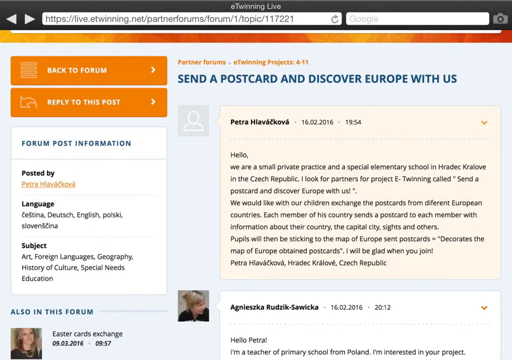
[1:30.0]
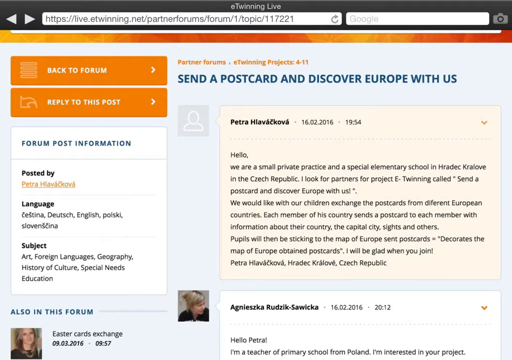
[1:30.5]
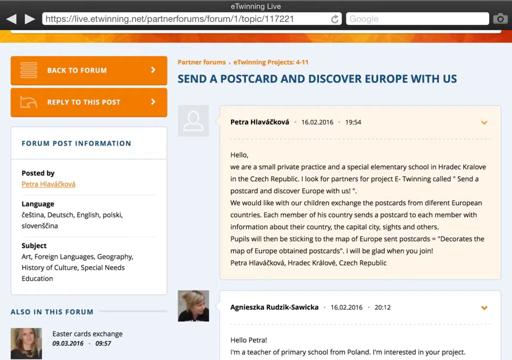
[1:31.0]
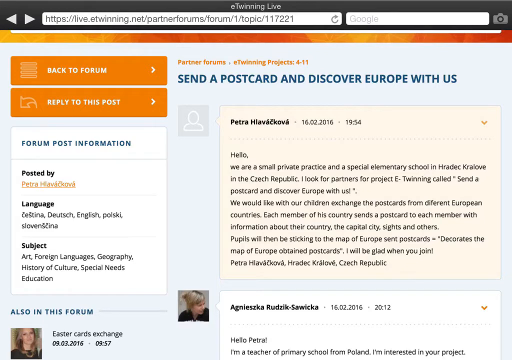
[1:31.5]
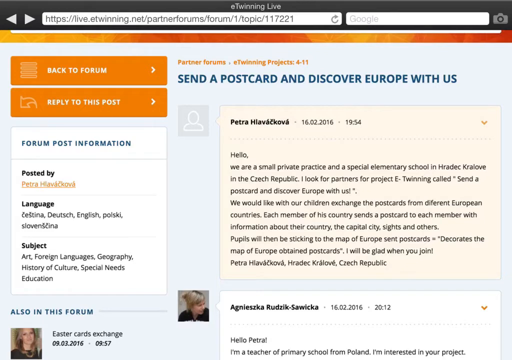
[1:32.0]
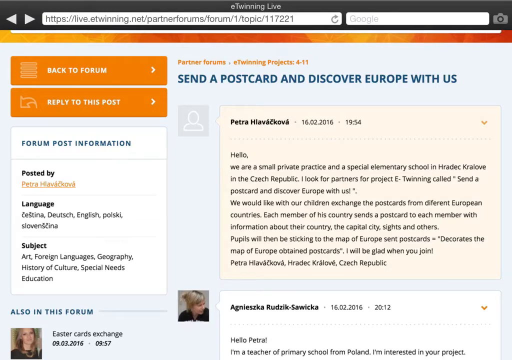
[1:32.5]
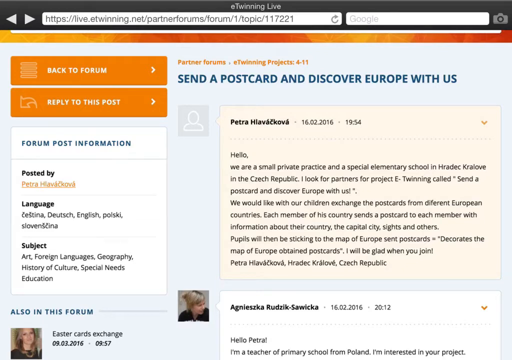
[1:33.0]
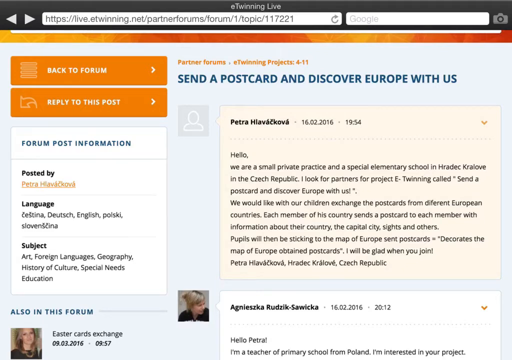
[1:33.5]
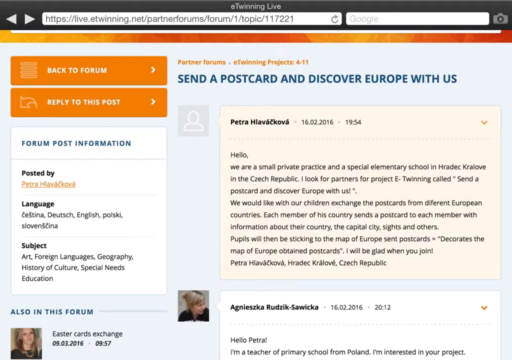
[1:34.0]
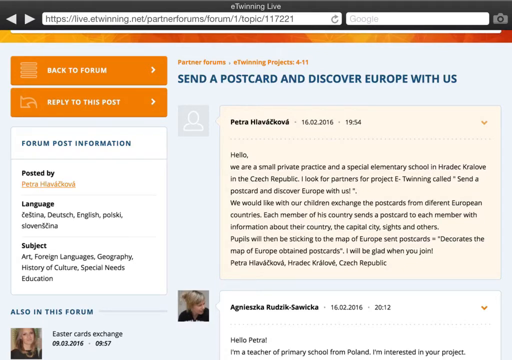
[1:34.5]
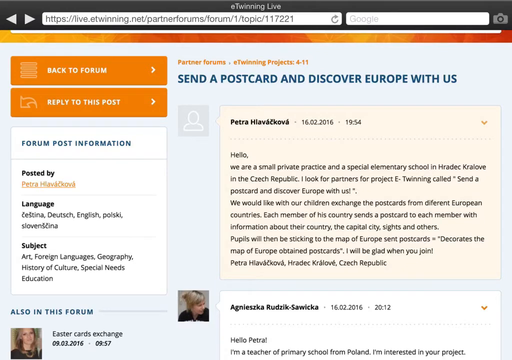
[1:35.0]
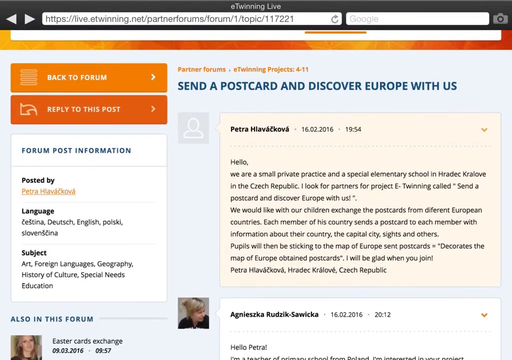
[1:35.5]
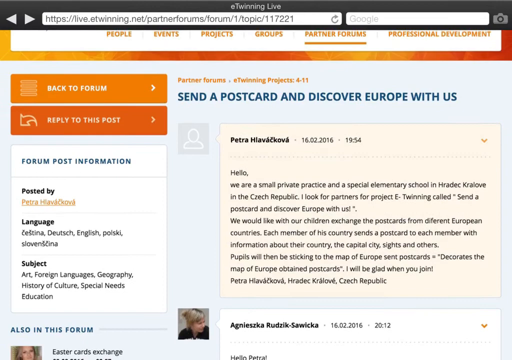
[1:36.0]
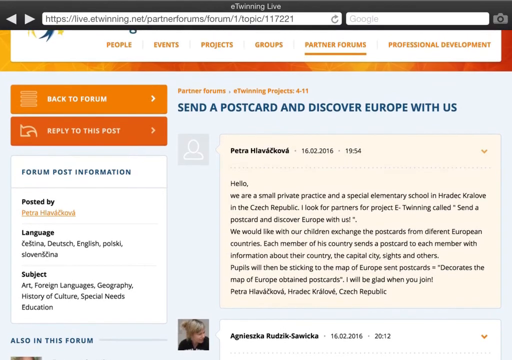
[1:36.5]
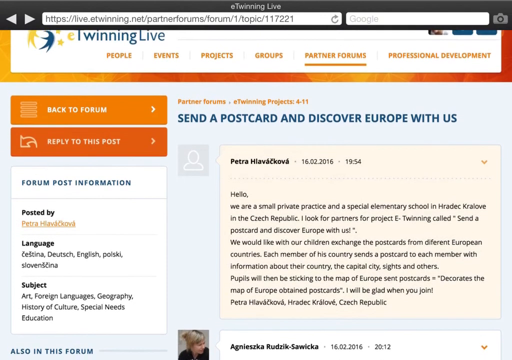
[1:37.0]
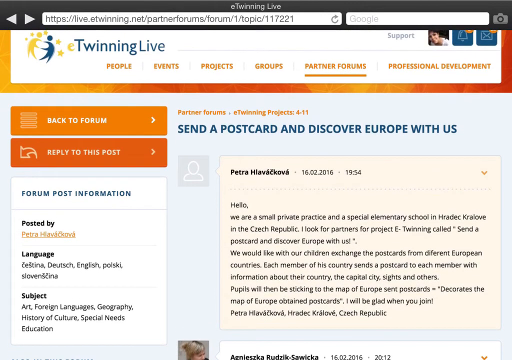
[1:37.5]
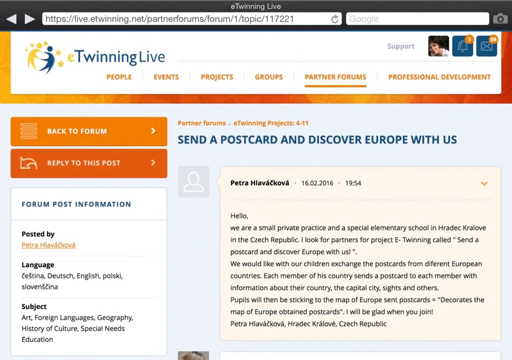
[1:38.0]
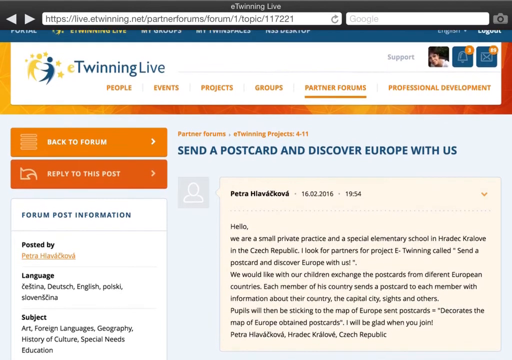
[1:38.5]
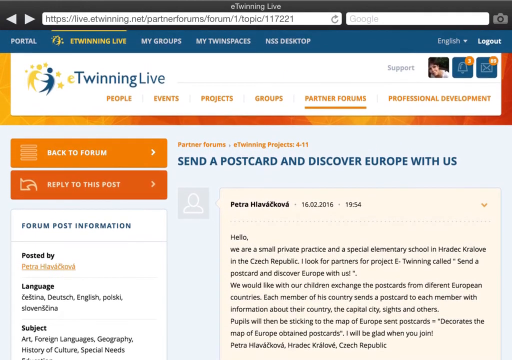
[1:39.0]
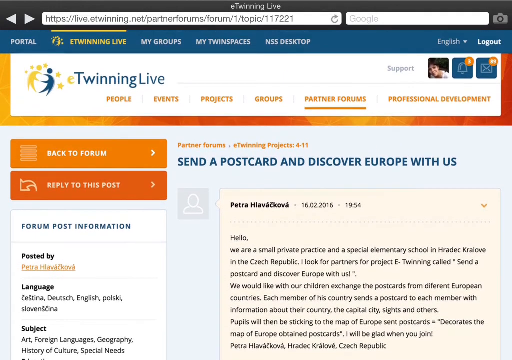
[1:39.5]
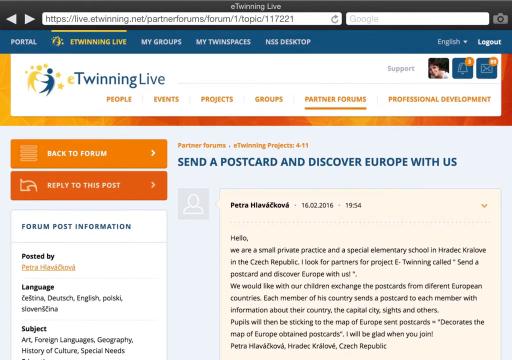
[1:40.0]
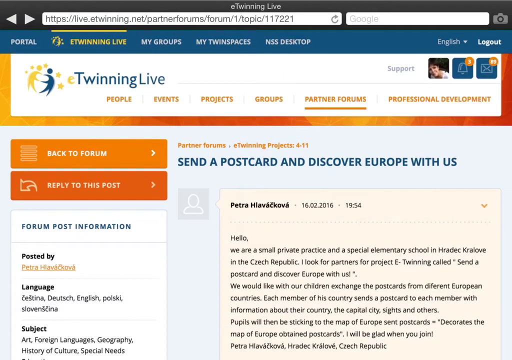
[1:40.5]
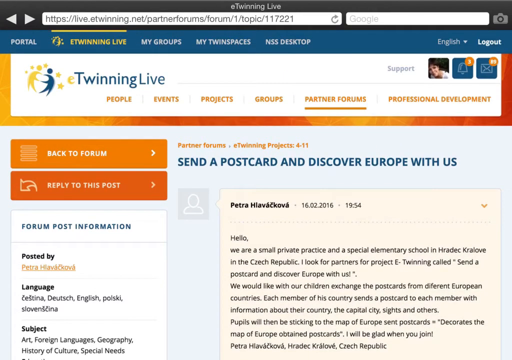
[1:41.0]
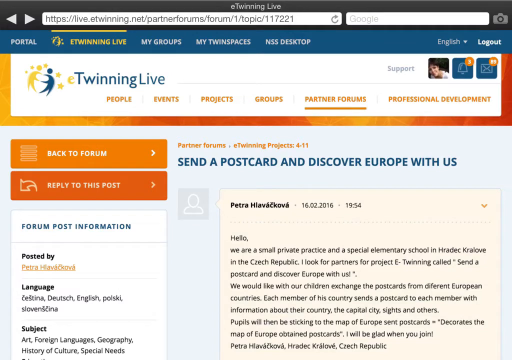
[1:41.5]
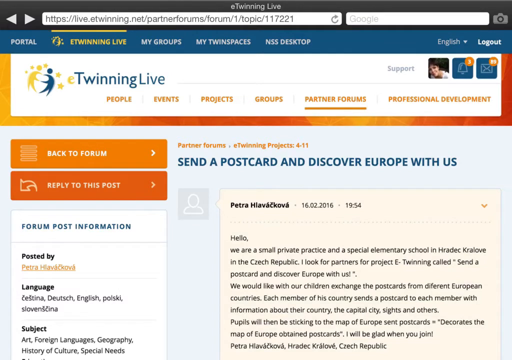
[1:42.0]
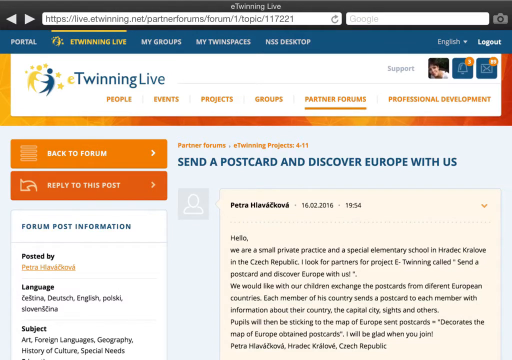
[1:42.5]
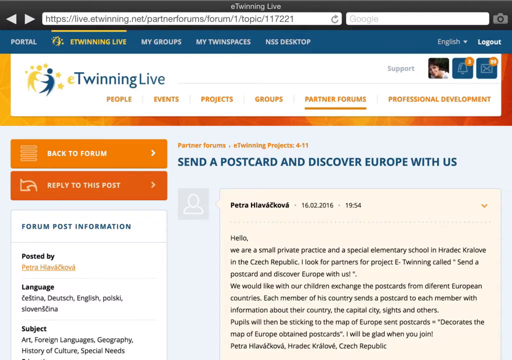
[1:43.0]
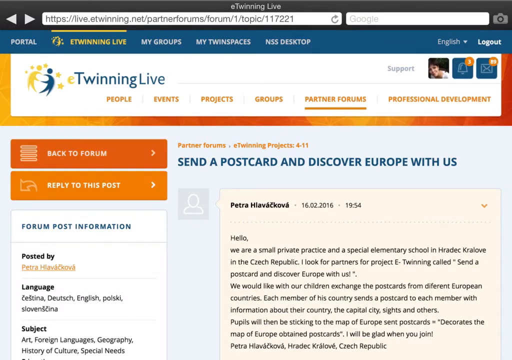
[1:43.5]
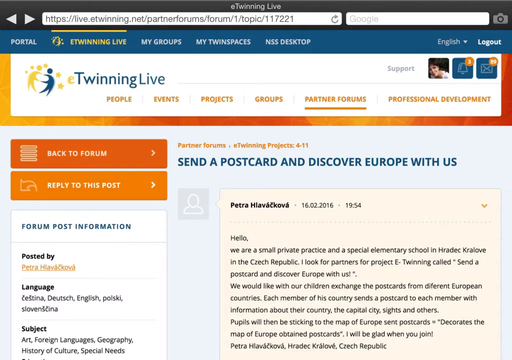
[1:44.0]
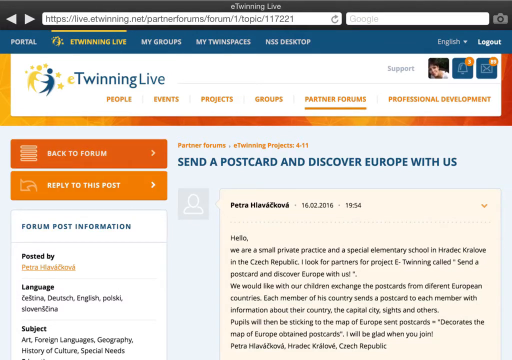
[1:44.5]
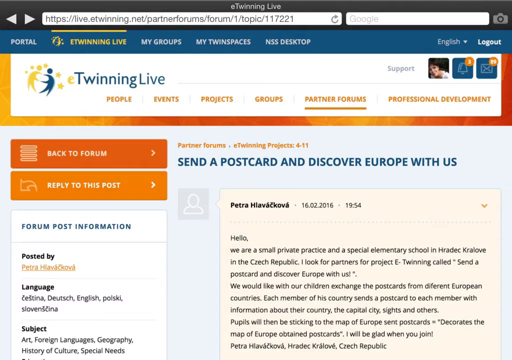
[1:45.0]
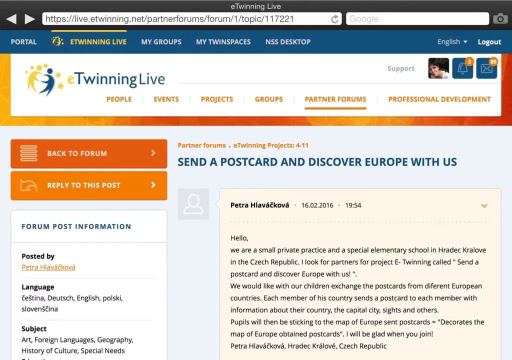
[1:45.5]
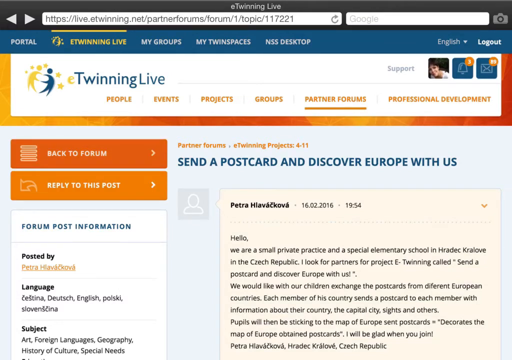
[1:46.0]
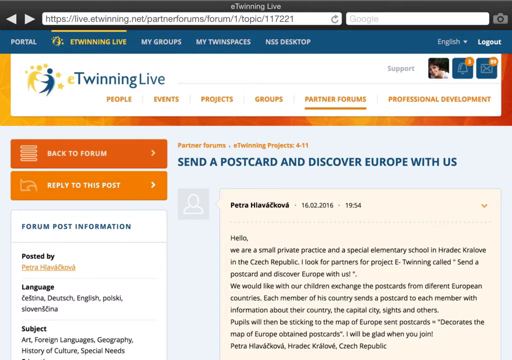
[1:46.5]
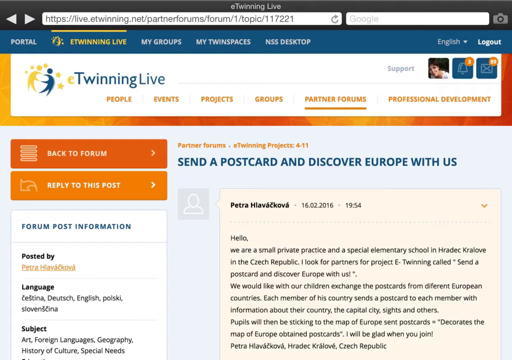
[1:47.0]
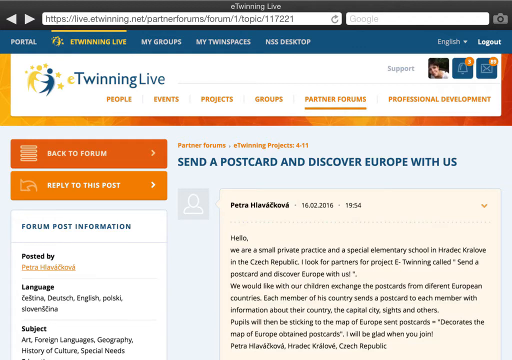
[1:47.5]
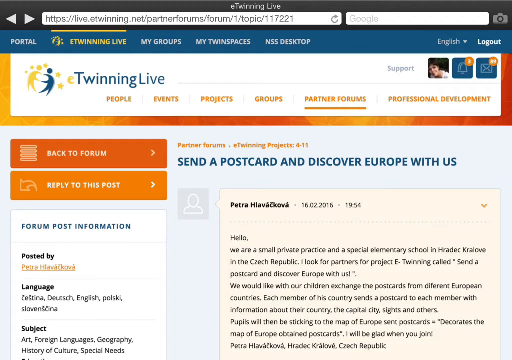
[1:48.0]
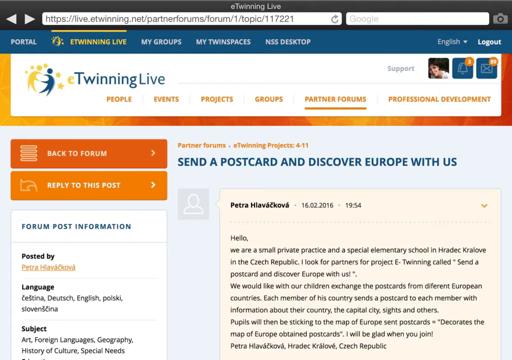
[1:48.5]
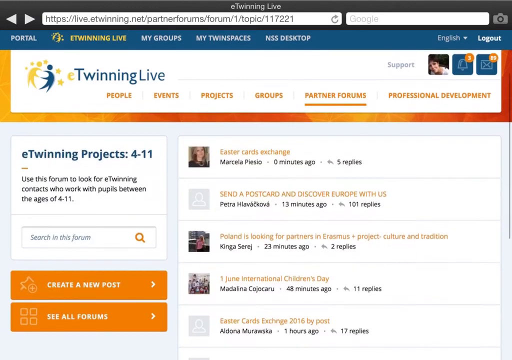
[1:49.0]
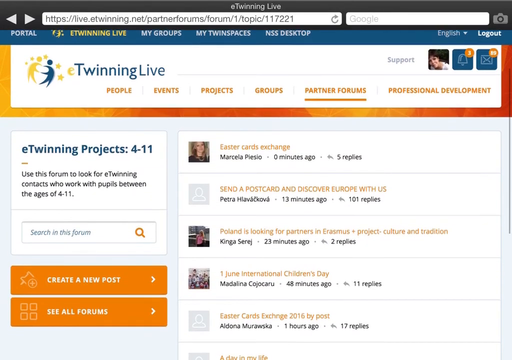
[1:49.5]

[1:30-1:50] The user is looking at Petra's post about "send a postcard and discover Europe with us", with the forum post information and Petra's text. First Petra's listing and then the reply are shown, and then the view quickly switches back to the rest of the partner forums, apparently by clicking back to the forum; the user stays on this page for a little while. Then the user clicks back onto eTwinning projects 4 to 11, and the whole listing screen is visible, with postings such as "Easter Cards Exchange", "send a postcard and discover Europe with us", "Poland is looking for partners", "1 June International Children's Day" and "Easter Cards Exchange 2016". In the top right corner is the image of the account holder, a bell icon with a 3 in a circle showing 3 notifications, and next to it a blue square button with an envelope image and a circle that says 89, apparently 89 messages.